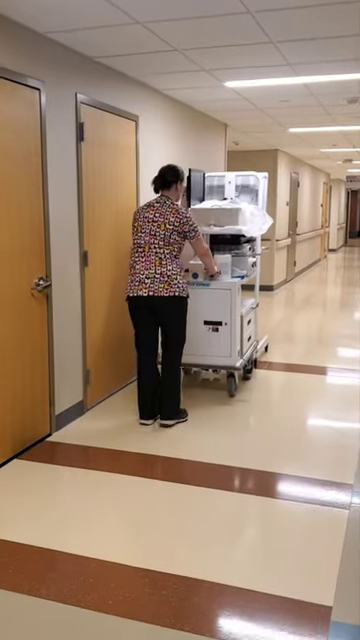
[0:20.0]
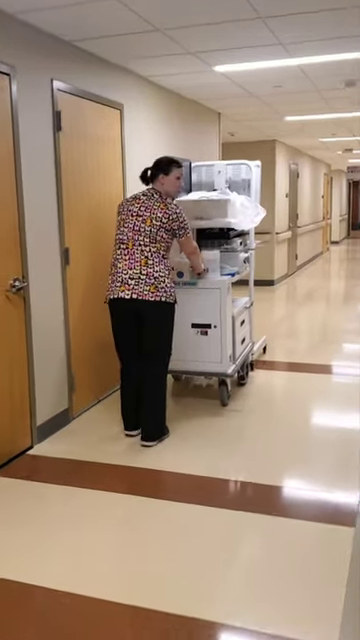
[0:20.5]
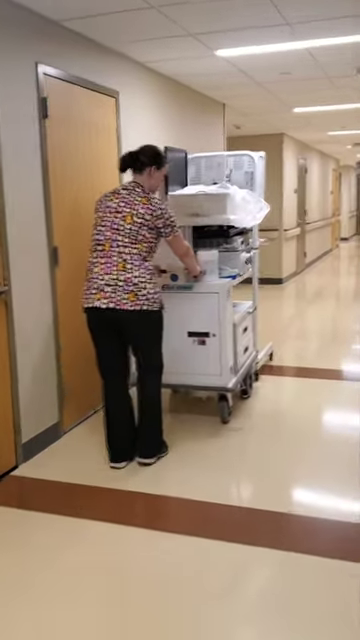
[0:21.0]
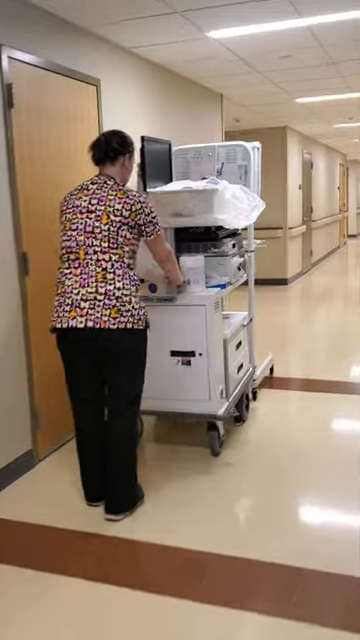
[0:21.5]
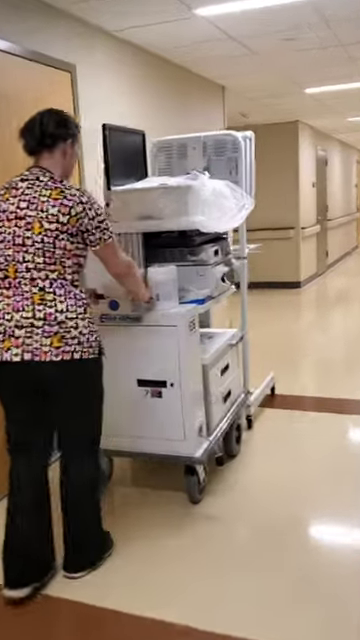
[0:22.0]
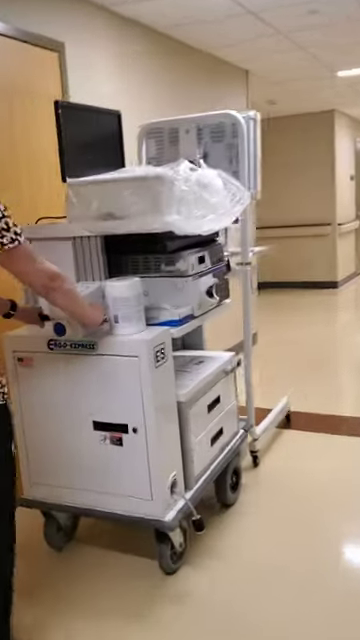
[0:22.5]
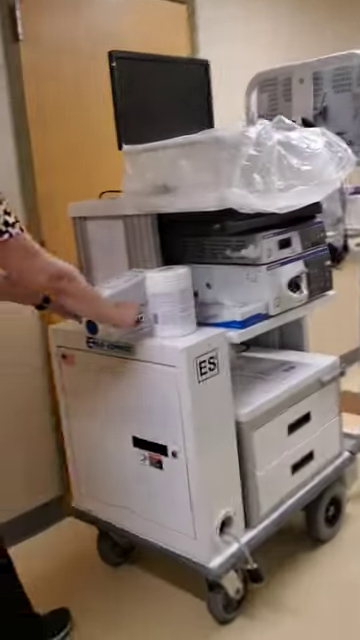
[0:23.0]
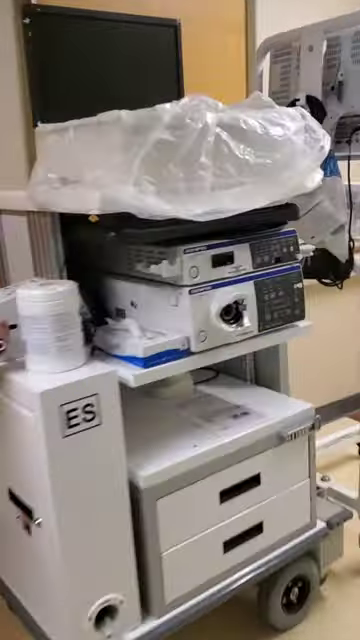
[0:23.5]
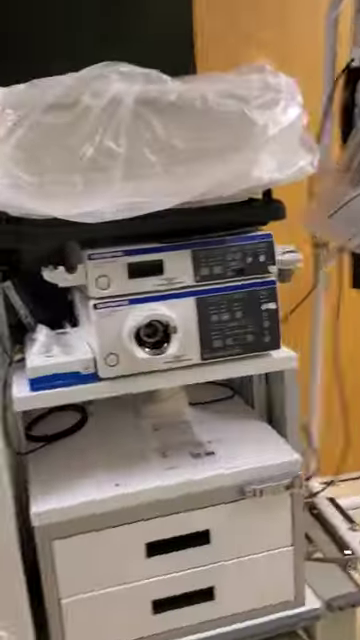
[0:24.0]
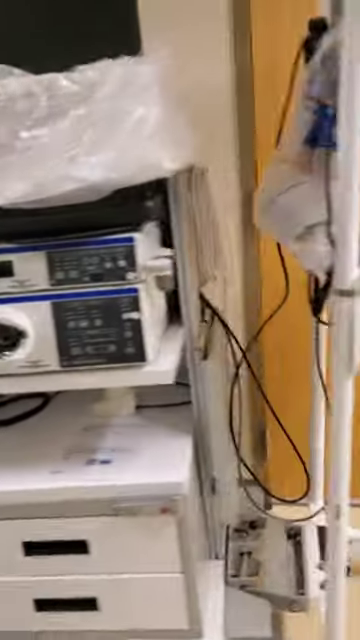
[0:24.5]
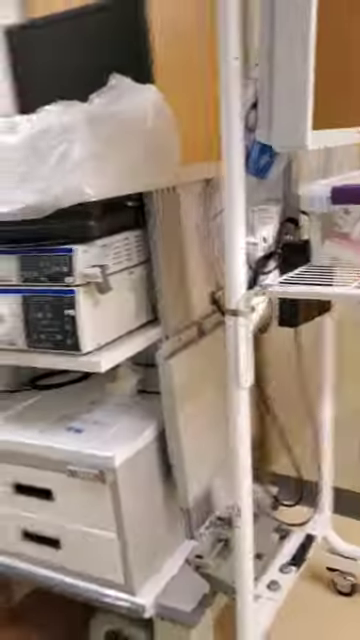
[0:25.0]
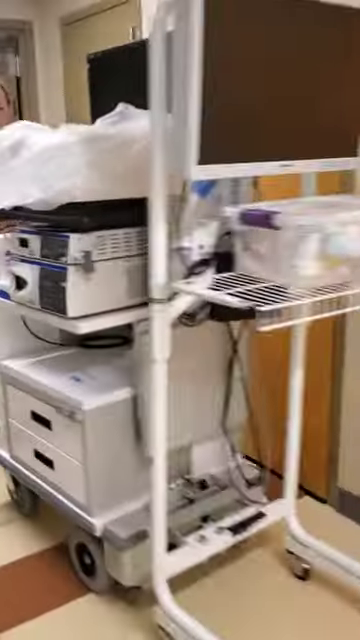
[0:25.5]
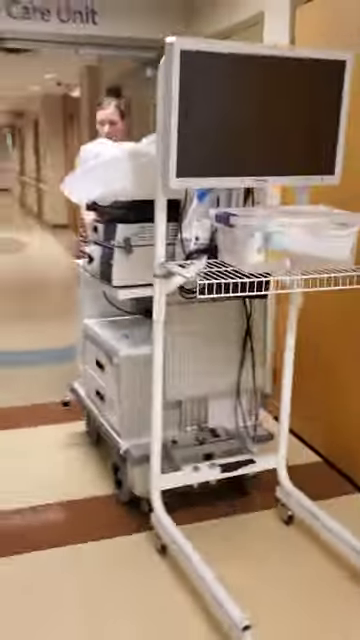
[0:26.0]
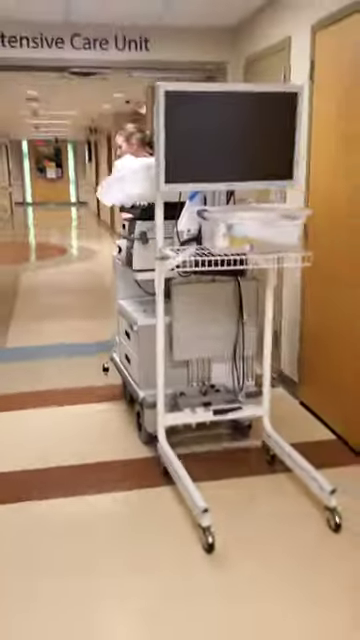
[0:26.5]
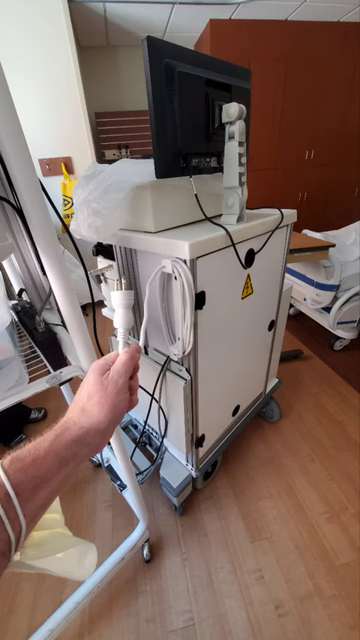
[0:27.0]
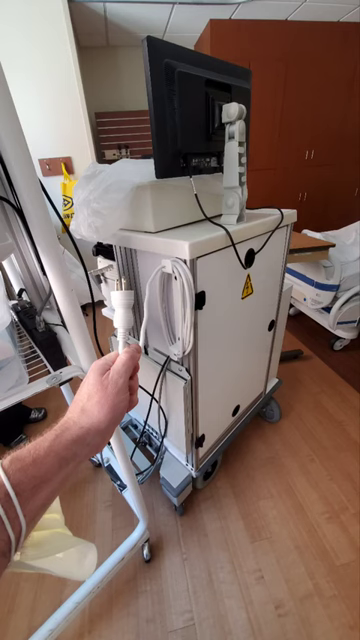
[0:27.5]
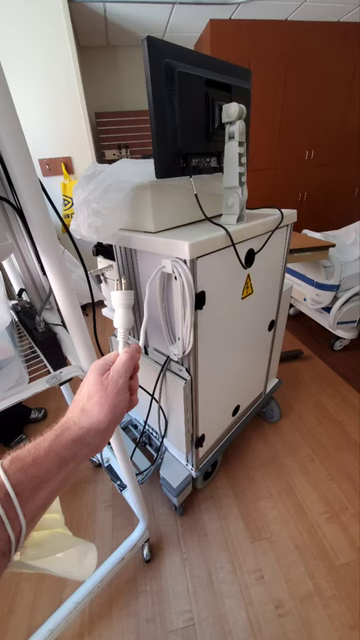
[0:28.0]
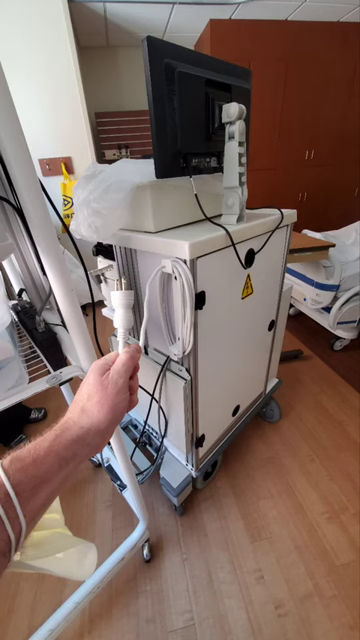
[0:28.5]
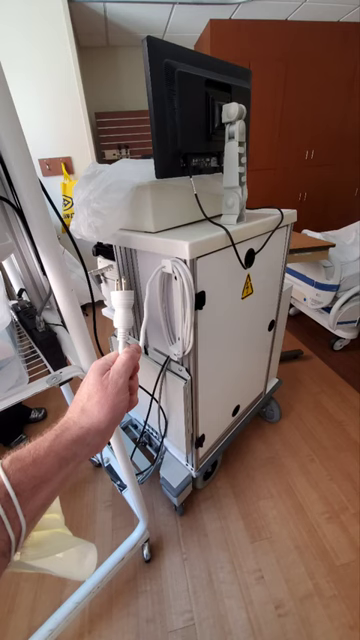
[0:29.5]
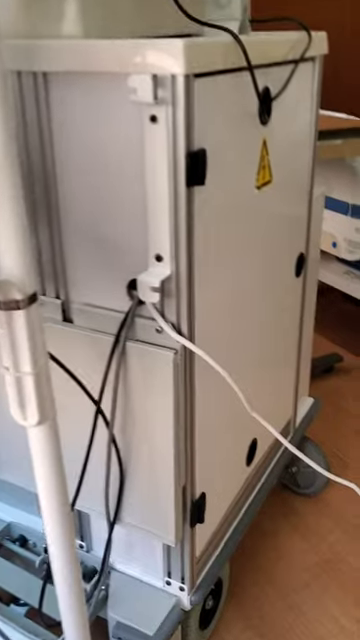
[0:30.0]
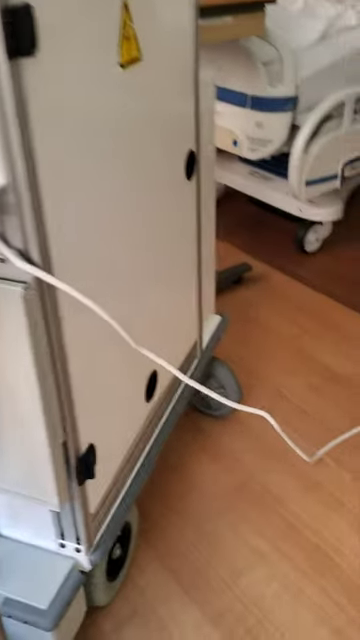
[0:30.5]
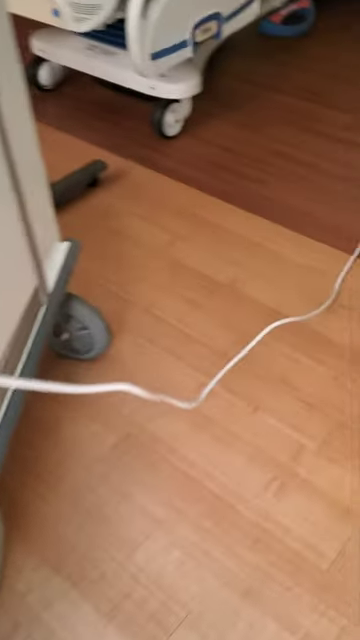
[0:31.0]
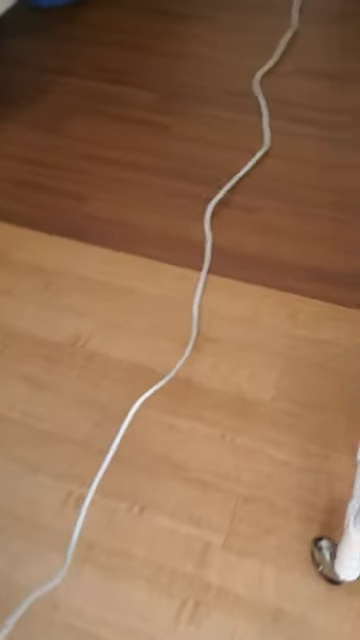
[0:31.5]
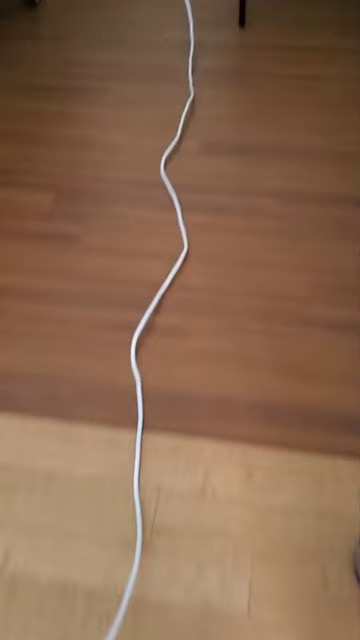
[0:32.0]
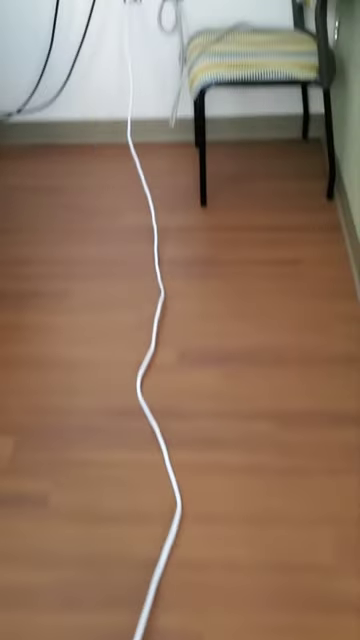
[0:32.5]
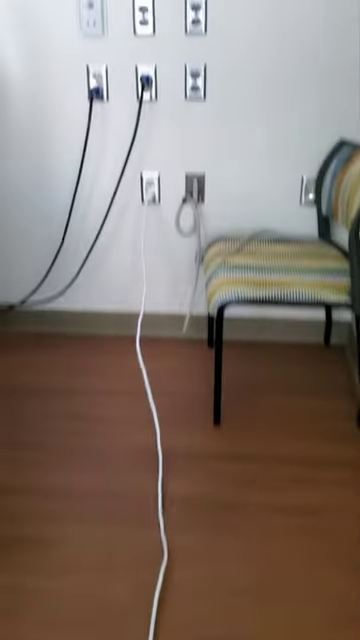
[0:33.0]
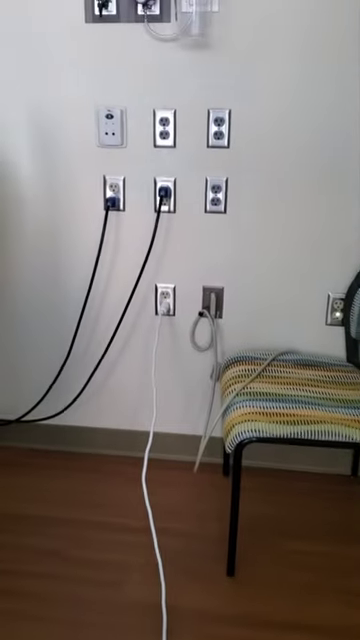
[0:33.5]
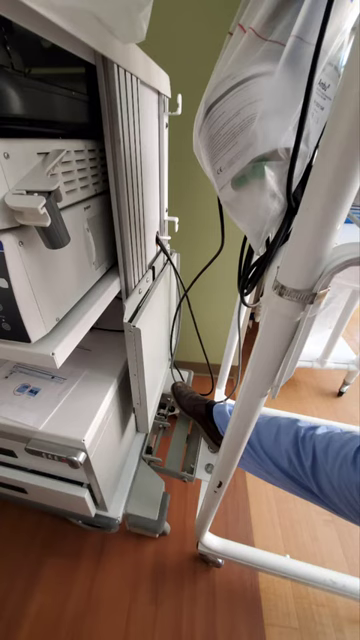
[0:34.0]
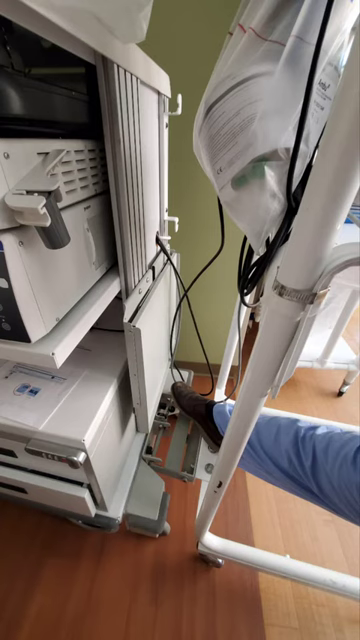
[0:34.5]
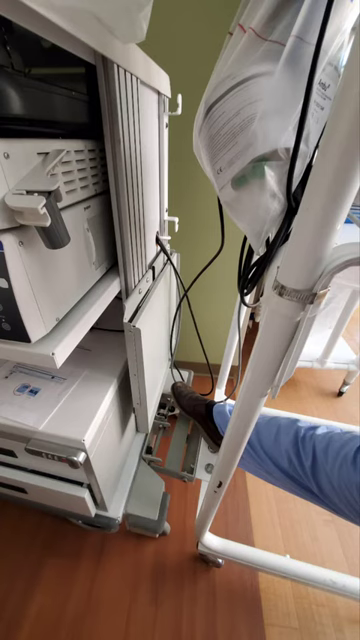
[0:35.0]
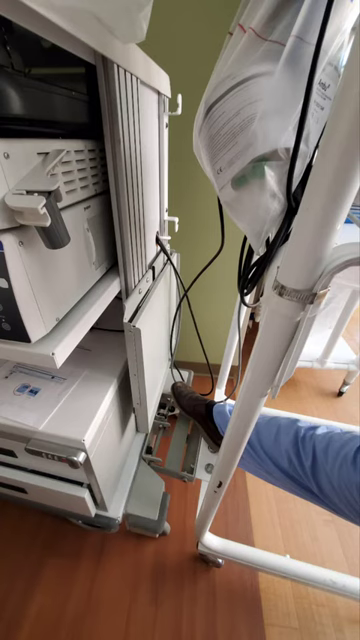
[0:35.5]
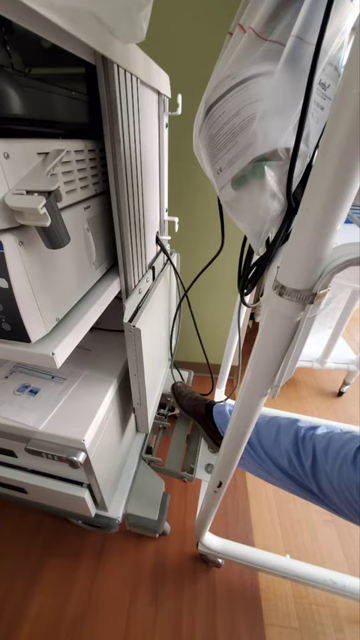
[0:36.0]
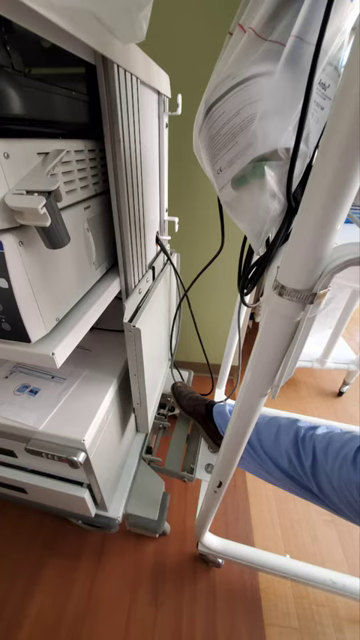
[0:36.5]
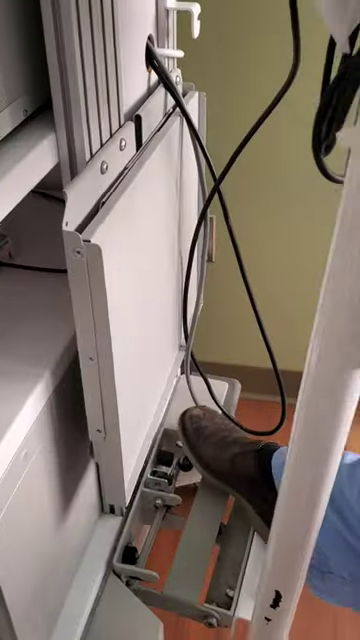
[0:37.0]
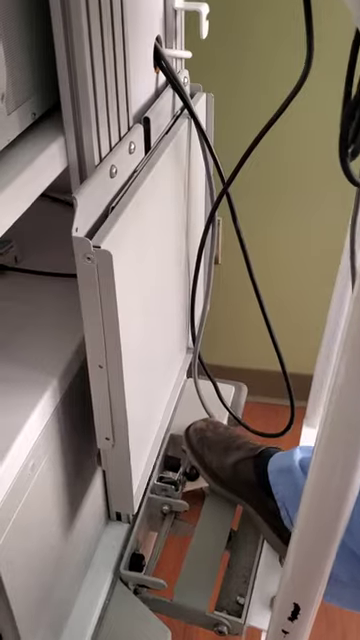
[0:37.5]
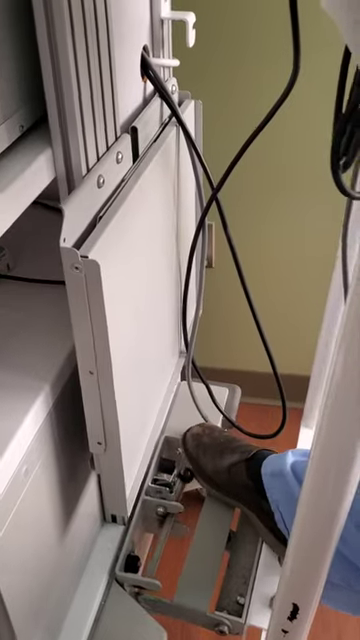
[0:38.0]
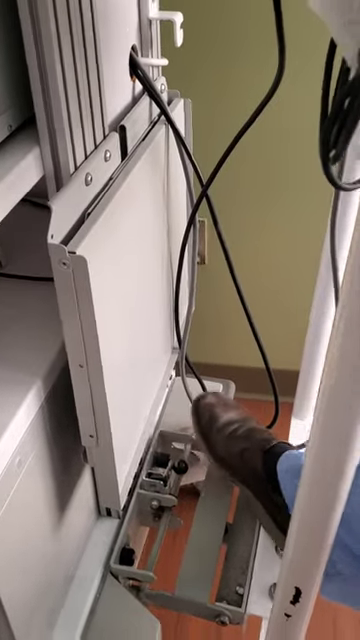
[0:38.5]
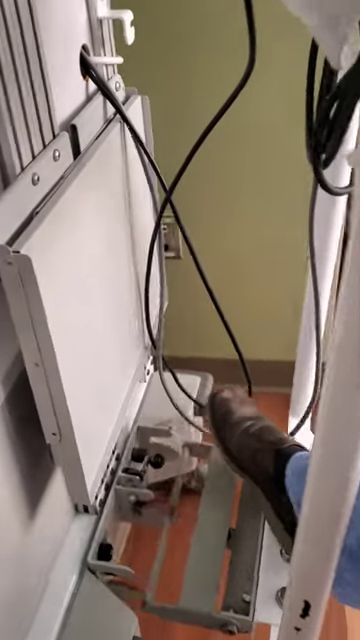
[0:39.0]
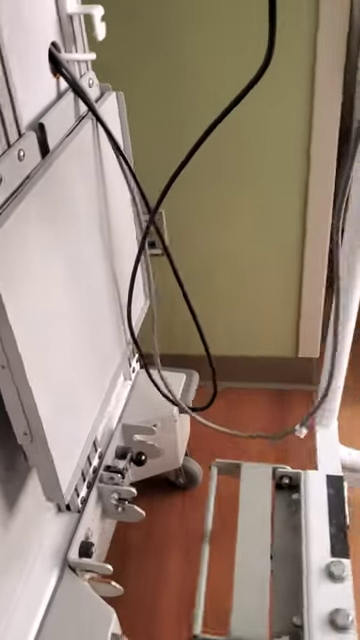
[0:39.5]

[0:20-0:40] The same woman, in a multicolored scrub top and black scrub pants with her hair tied back, pushes the cart. The cart seems to hold different types of medical devices, which look like anything from modems to a monitor. It also has drawers, possibly for storing medical supplies. At the back of the cart is a screen like a TV monitor, attached to the cart and facing away from the woman as she pulls the cart along a hallway in a hospital-like setting. The video transitions to what looks like the inside of a hospital room, focusing on a three-prong plug and the outlets in the room. Someone then detaches the big monitor screen from the cart by stepping on a lever at the back bottom foot of the cart.